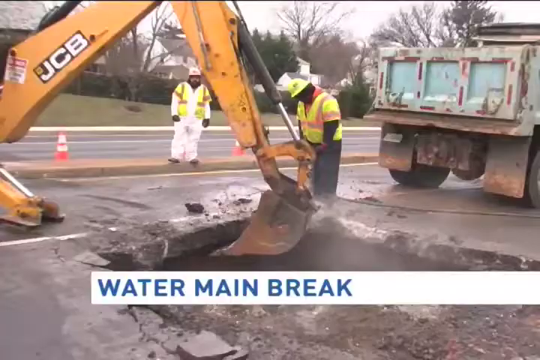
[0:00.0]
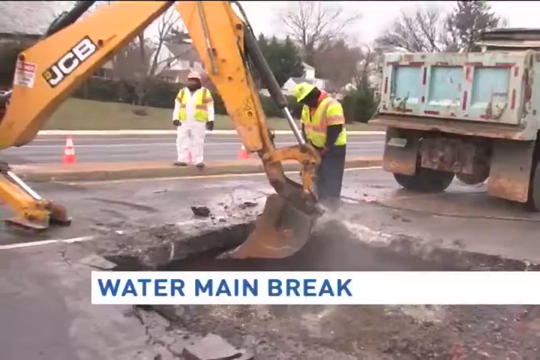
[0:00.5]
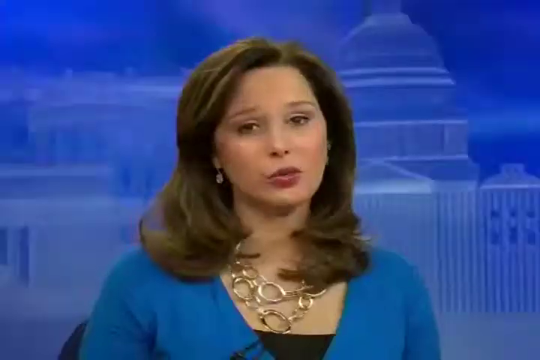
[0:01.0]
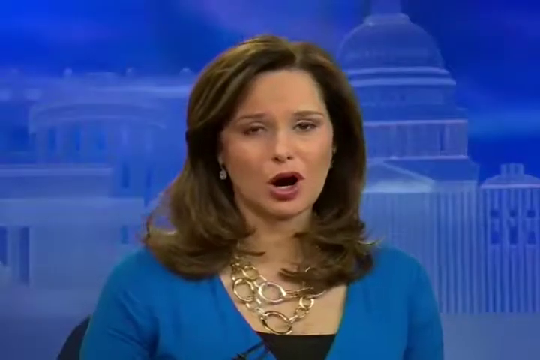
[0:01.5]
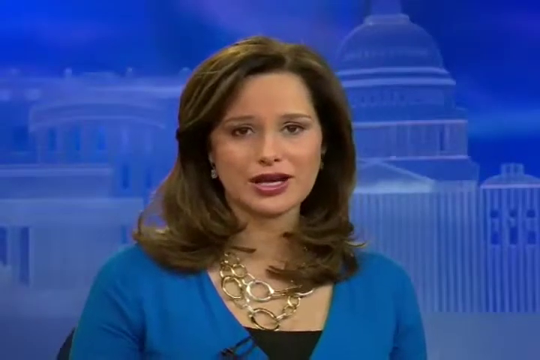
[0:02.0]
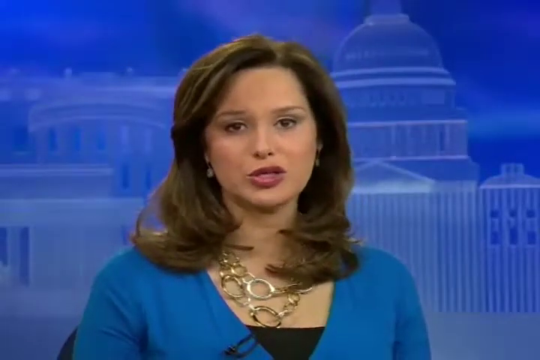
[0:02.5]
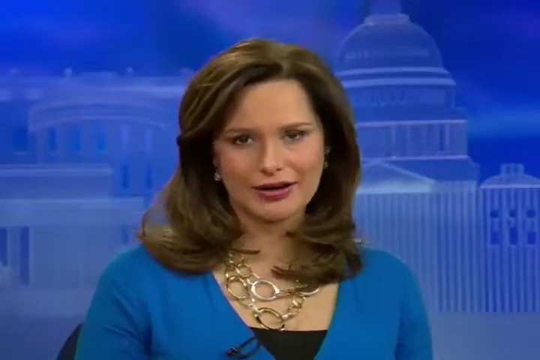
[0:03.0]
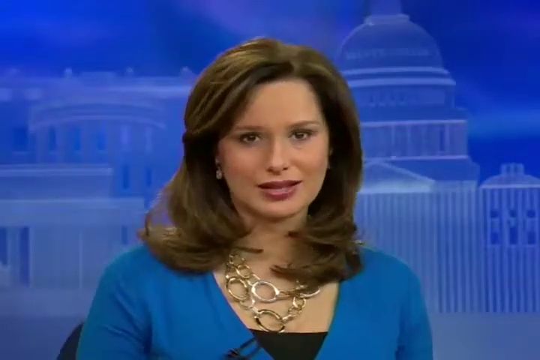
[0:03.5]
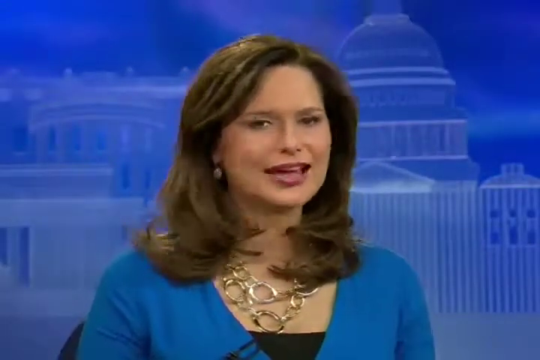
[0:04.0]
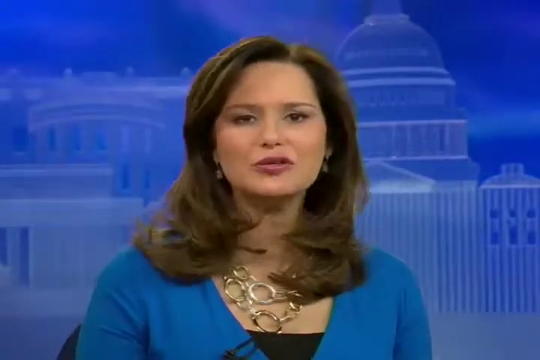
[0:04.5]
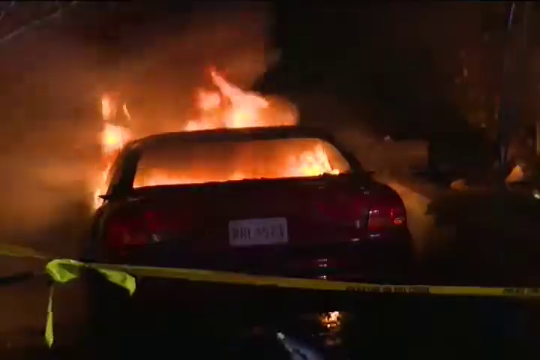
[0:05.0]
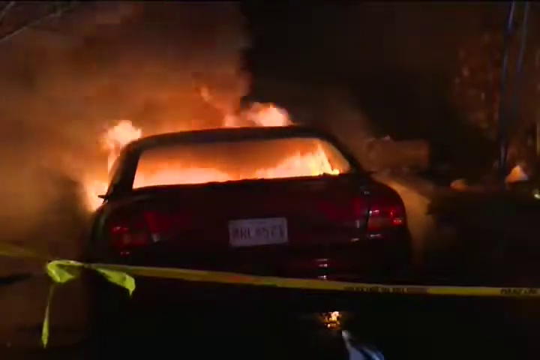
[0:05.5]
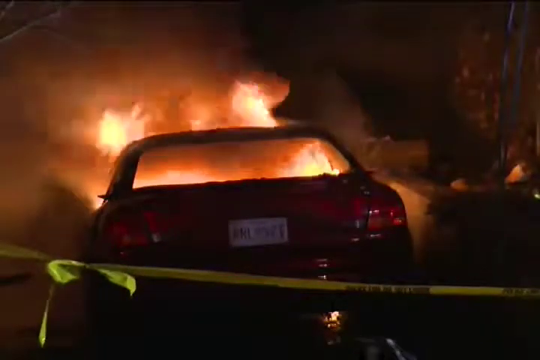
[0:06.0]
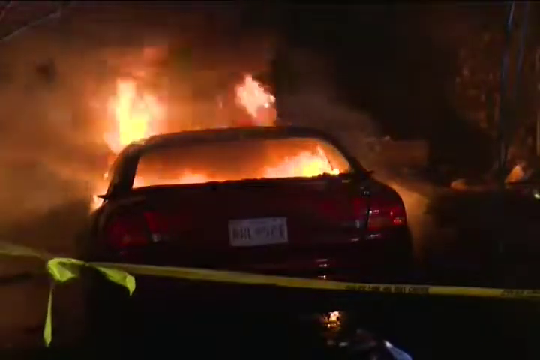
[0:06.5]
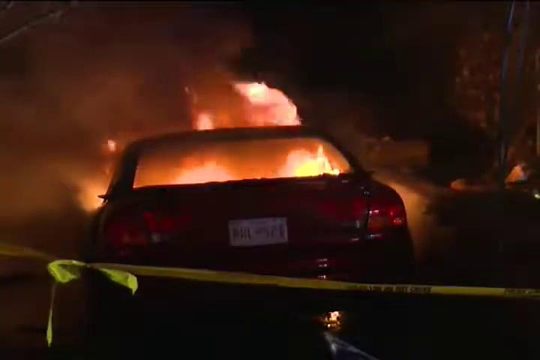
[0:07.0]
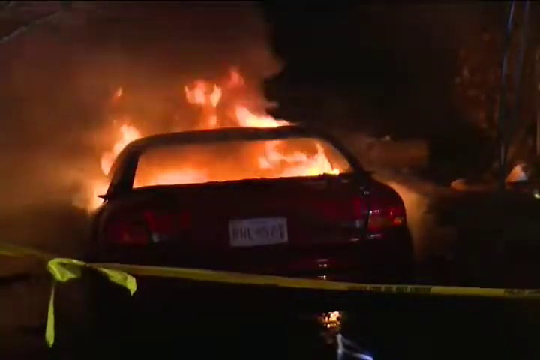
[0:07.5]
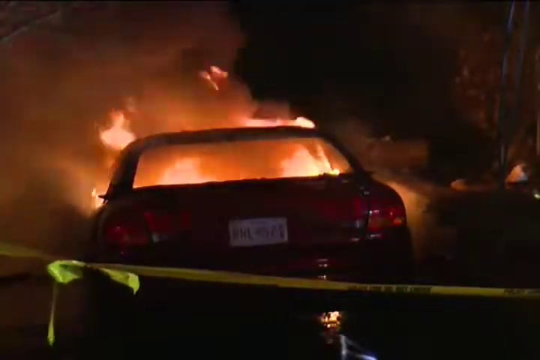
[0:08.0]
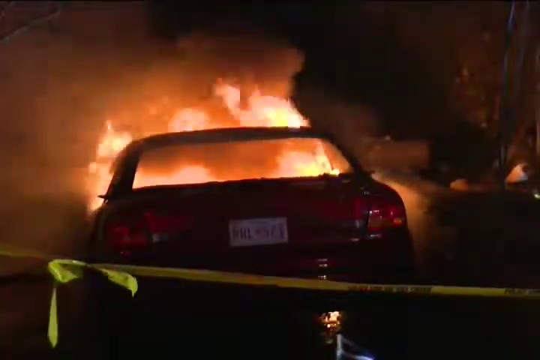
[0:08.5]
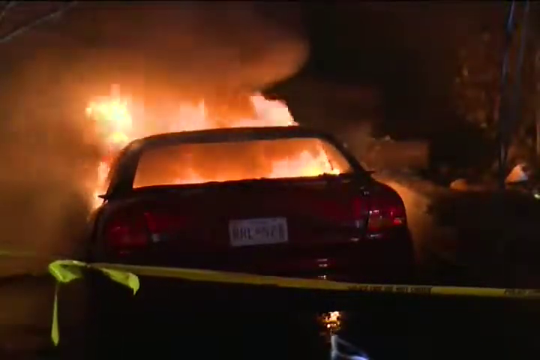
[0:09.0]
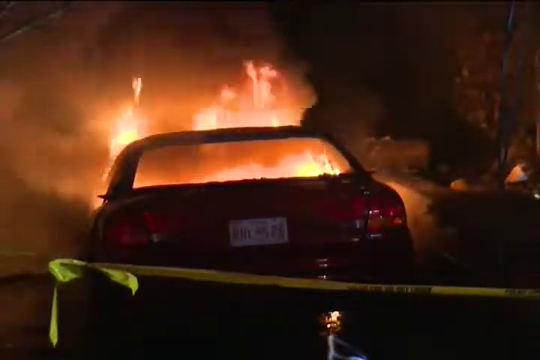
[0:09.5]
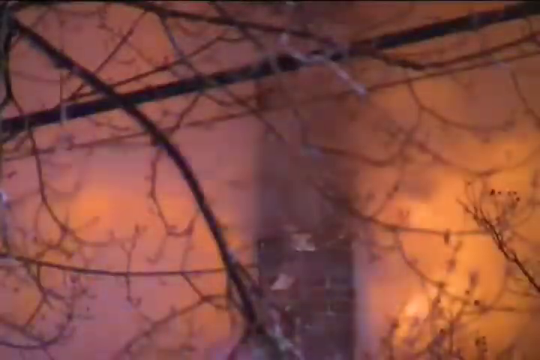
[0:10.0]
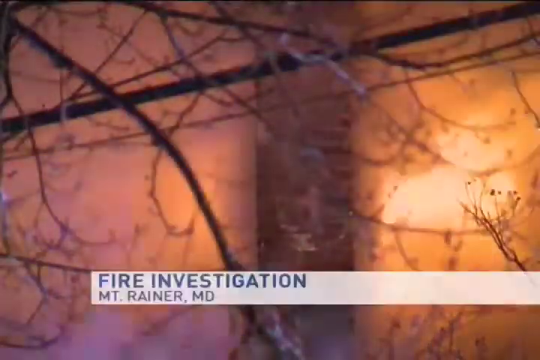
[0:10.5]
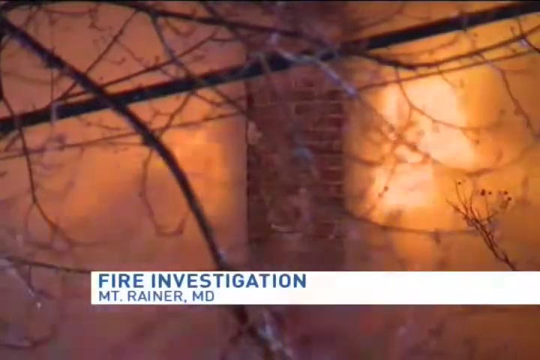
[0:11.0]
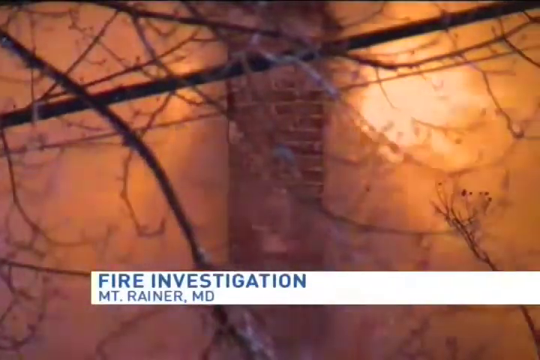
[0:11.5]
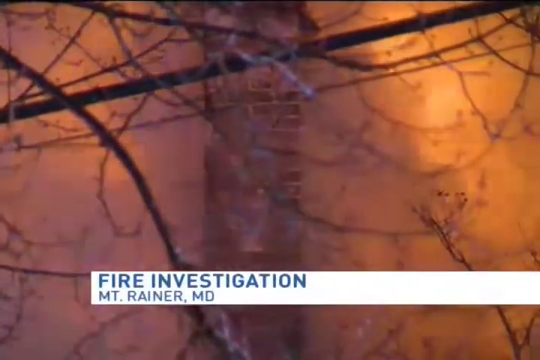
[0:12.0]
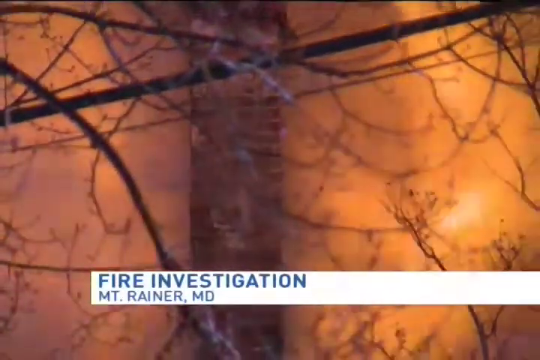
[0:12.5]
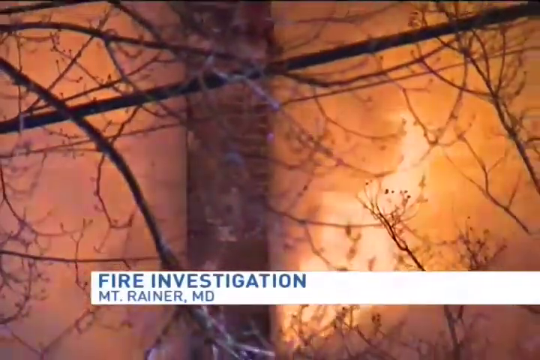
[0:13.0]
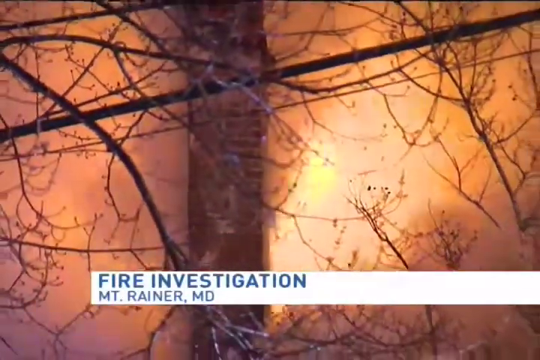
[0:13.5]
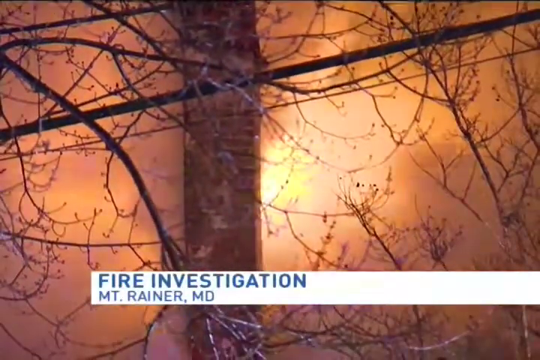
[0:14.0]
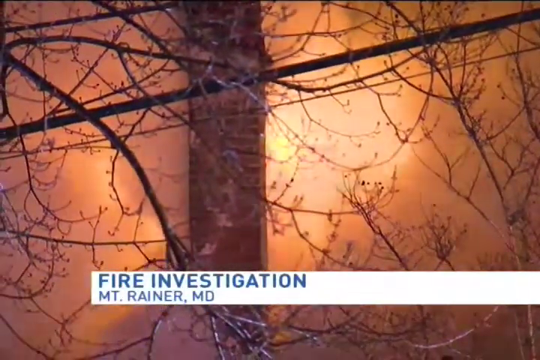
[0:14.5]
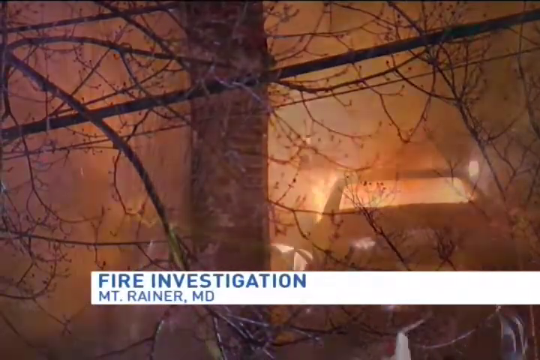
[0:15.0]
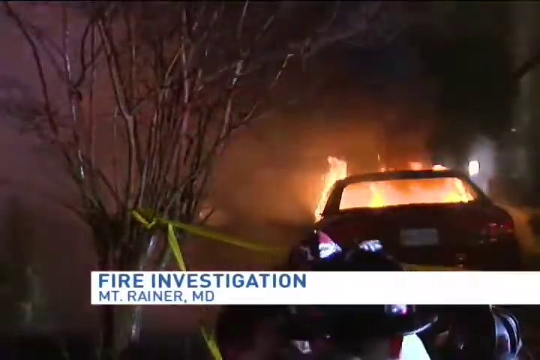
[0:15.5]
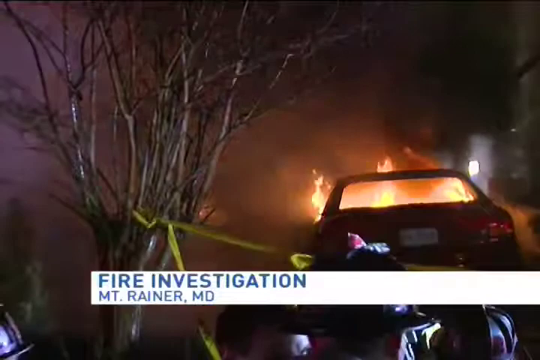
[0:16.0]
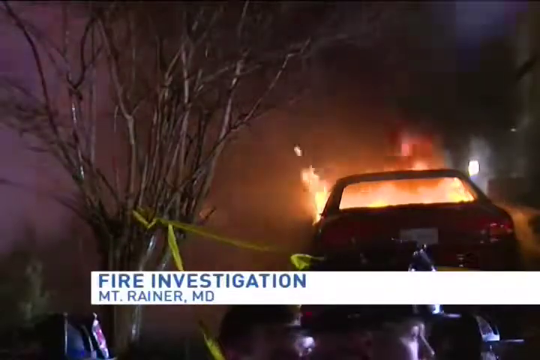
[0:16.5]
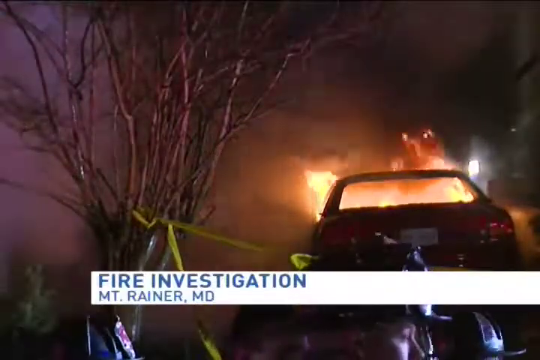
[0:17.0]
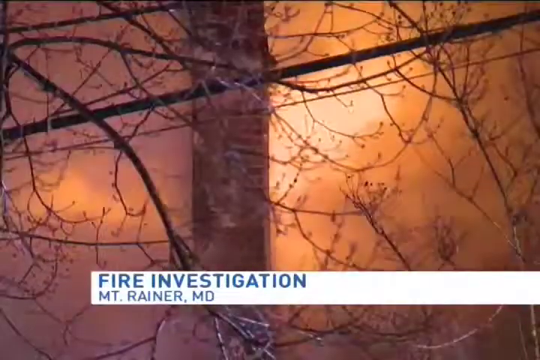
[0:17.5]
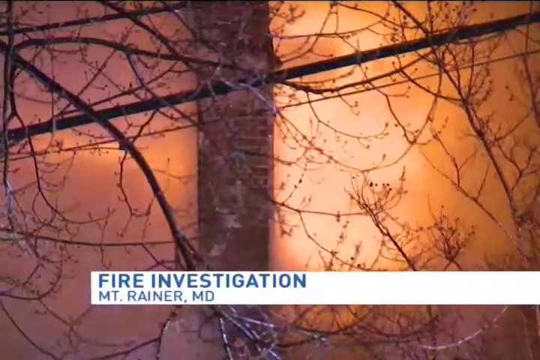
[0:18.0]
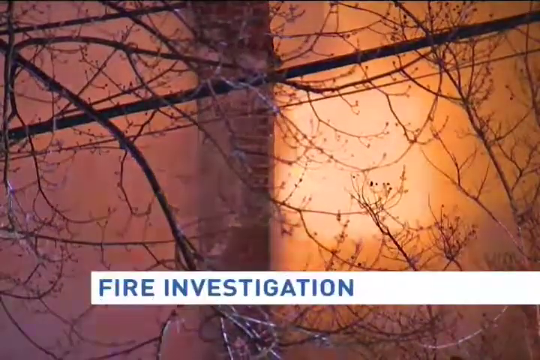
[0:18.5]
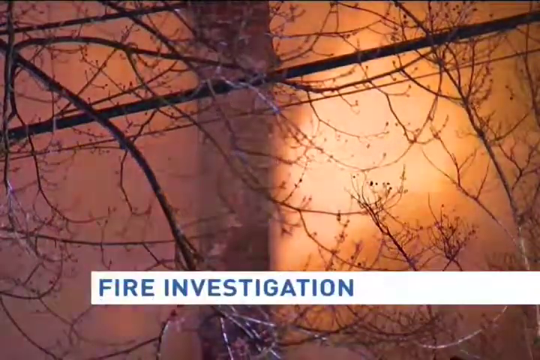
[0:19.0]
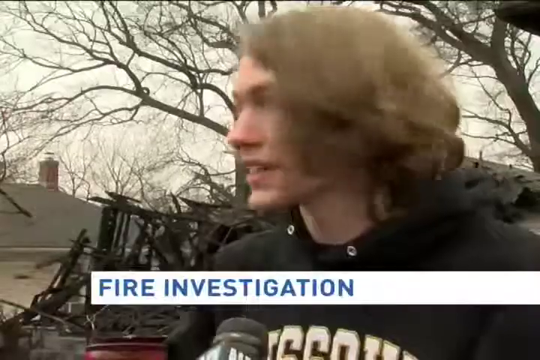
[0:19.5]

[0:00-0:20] A news channel broadcast shows the words "water main break" at the bottom of the screen. A construction machine digs into the ground, apparently a road, with two workers in the shot. It cuts to a news anchor with long brown hair, wearing a blue shirt and a necklace, with the silhouette of a building in the background. The scene cuts to a car on fire at night, with ropes set up to keep people from walking in, and then to a shot of the woods with a fire in a building. The bottom of the screen reads "fire investigation, Mount Rainier". A lot of smoke rises all over the area as the video cuts back to the burning car and then back to the woods with fire in them.